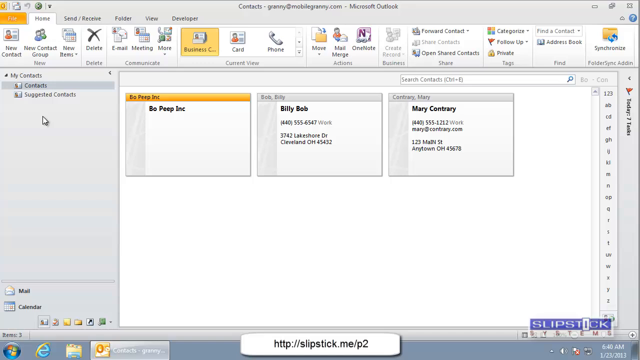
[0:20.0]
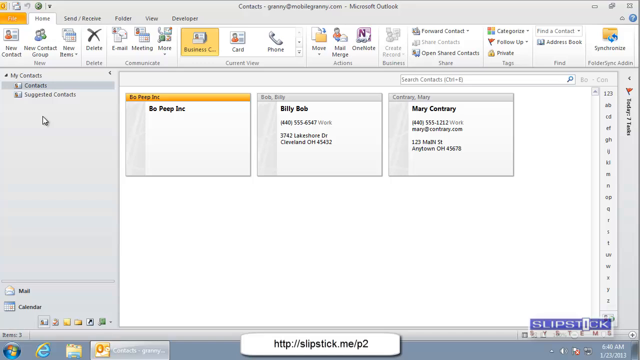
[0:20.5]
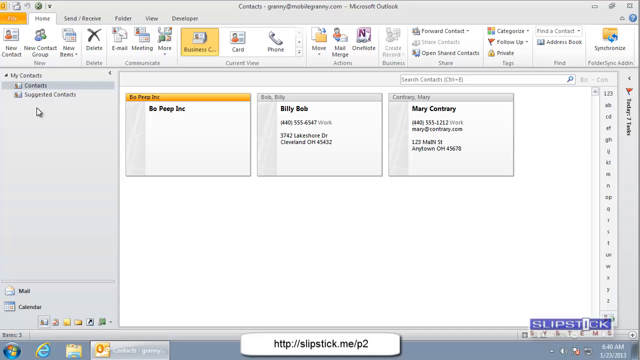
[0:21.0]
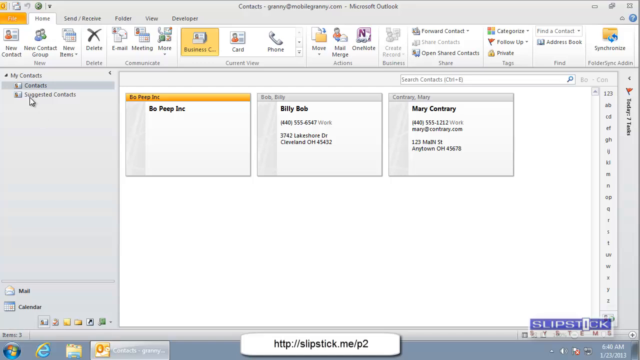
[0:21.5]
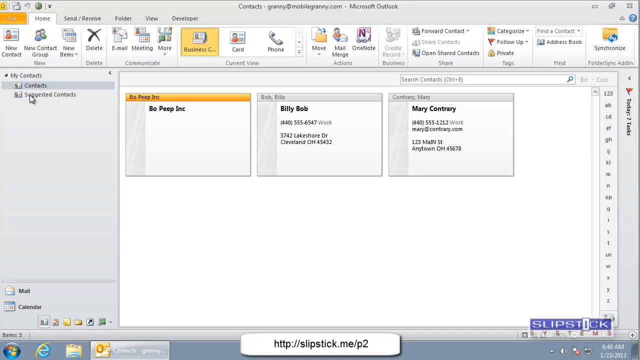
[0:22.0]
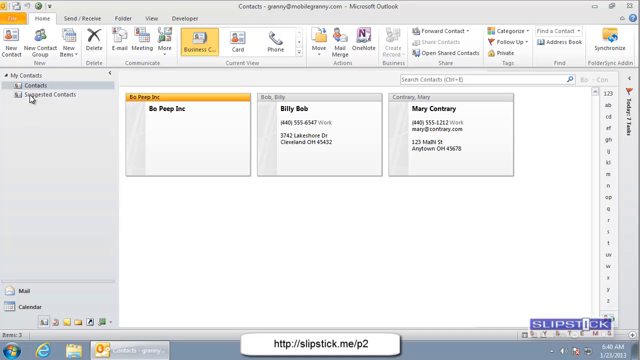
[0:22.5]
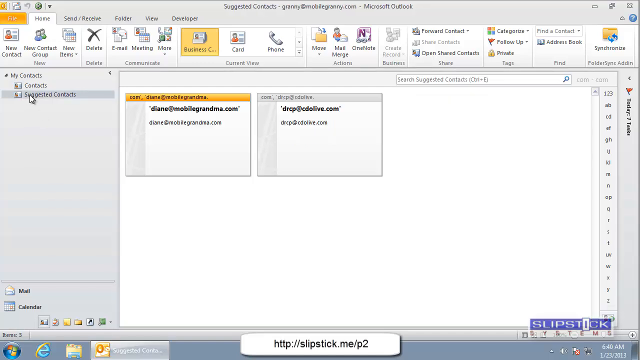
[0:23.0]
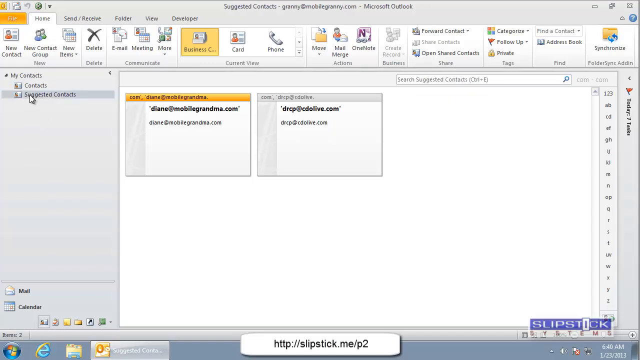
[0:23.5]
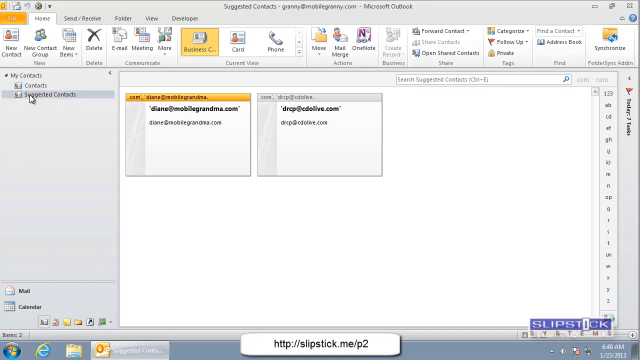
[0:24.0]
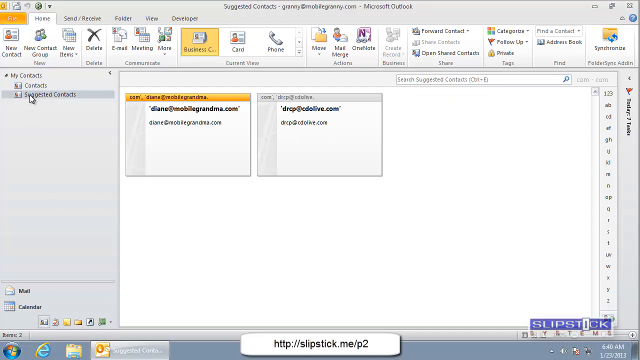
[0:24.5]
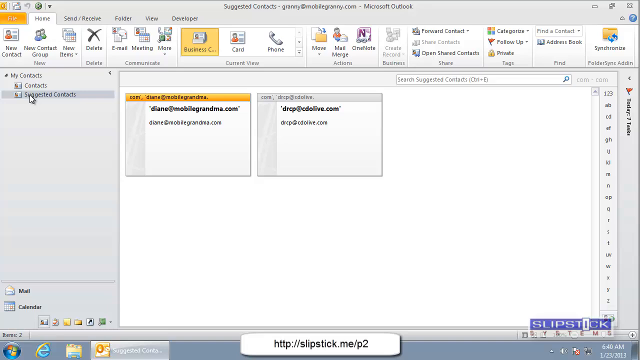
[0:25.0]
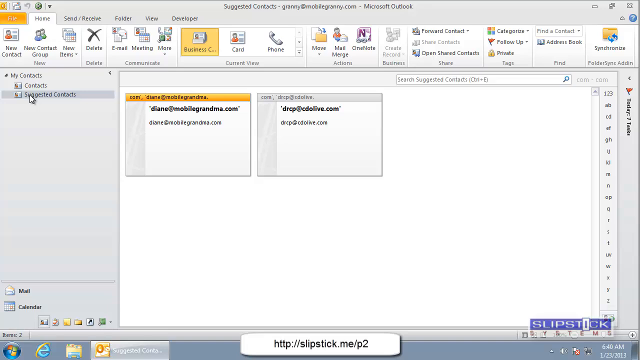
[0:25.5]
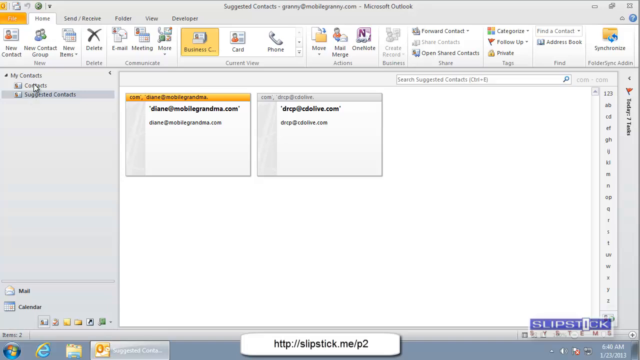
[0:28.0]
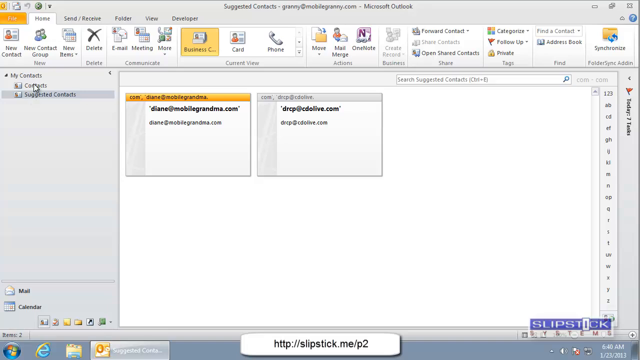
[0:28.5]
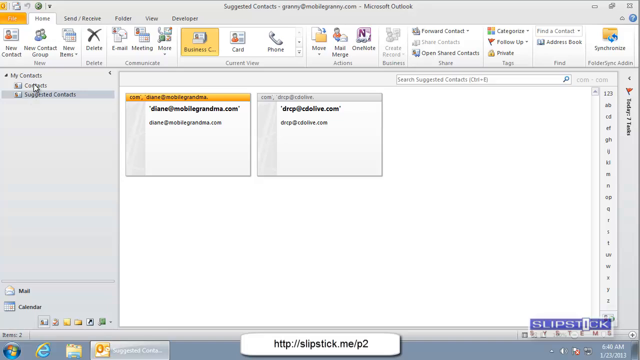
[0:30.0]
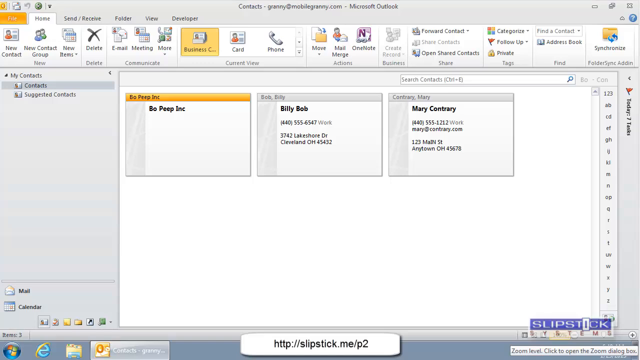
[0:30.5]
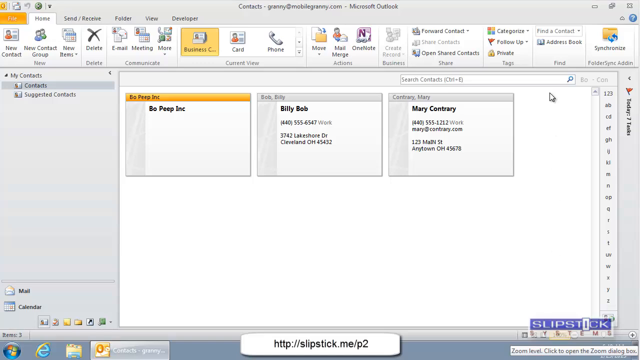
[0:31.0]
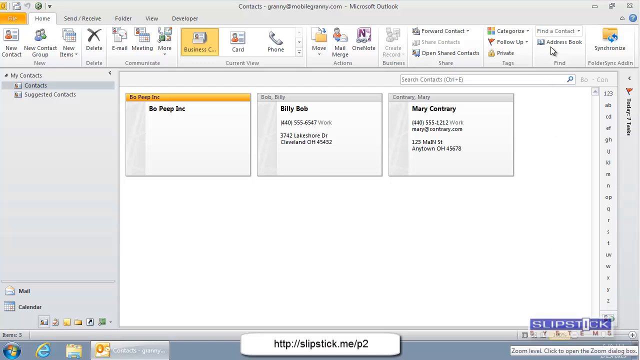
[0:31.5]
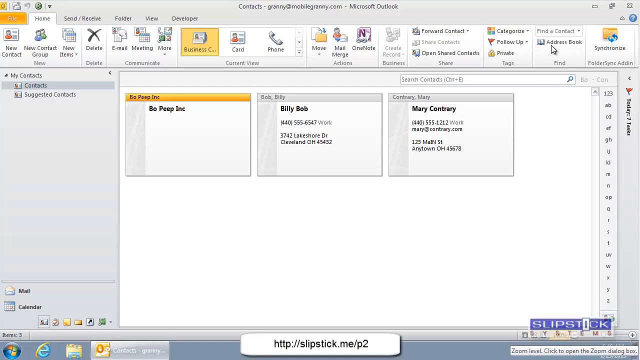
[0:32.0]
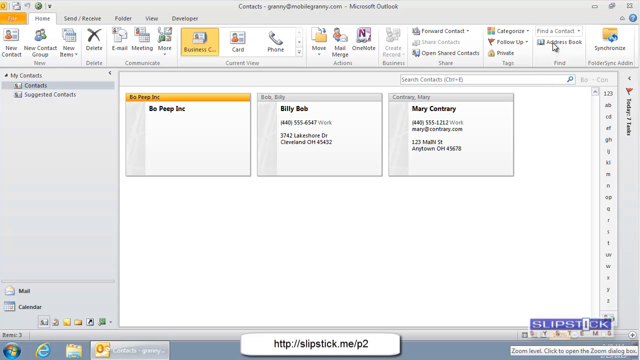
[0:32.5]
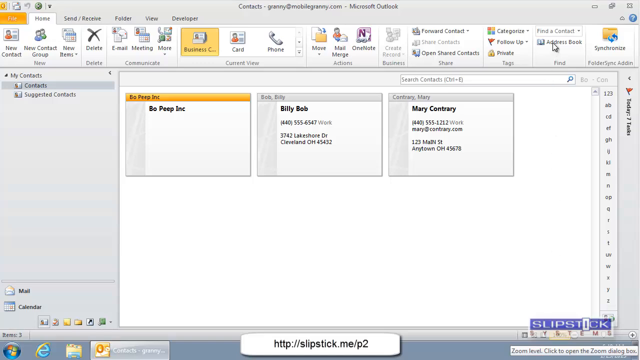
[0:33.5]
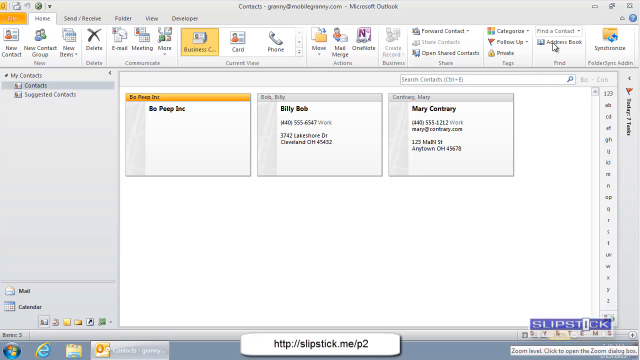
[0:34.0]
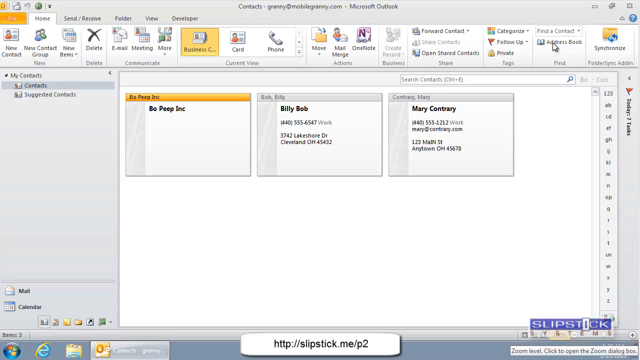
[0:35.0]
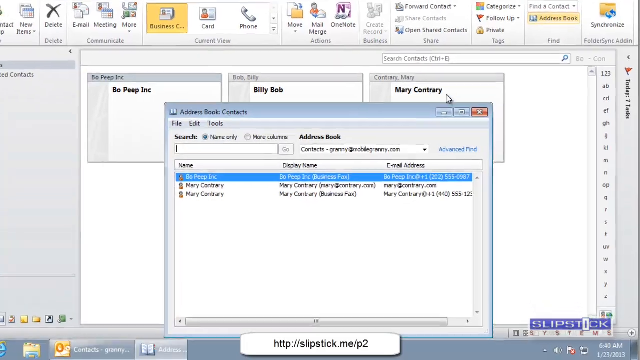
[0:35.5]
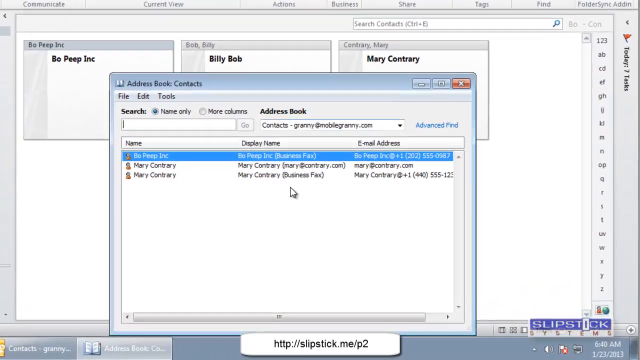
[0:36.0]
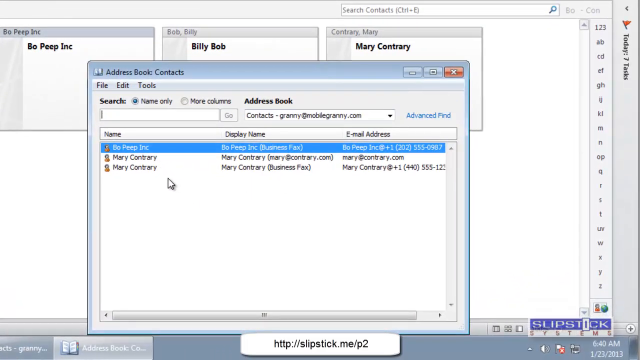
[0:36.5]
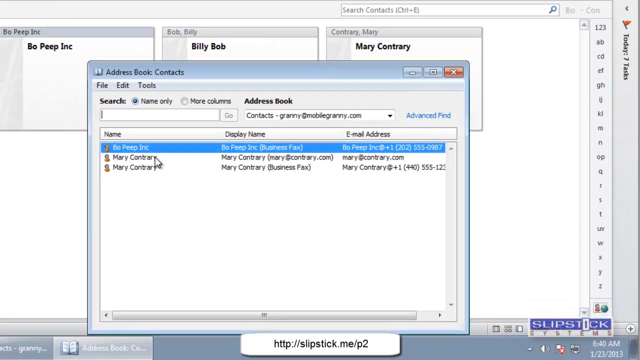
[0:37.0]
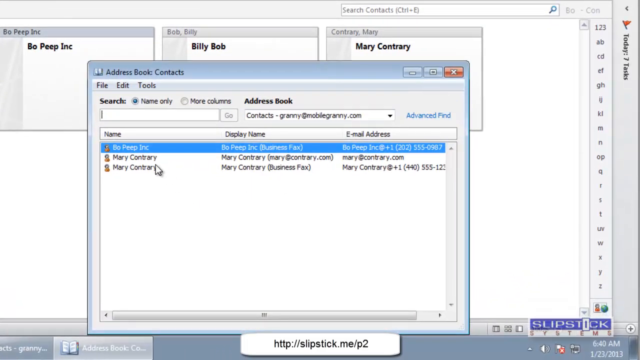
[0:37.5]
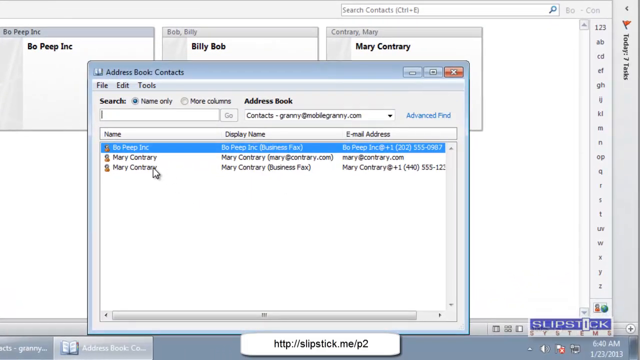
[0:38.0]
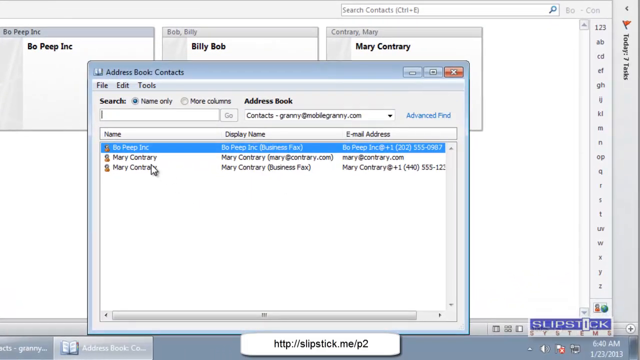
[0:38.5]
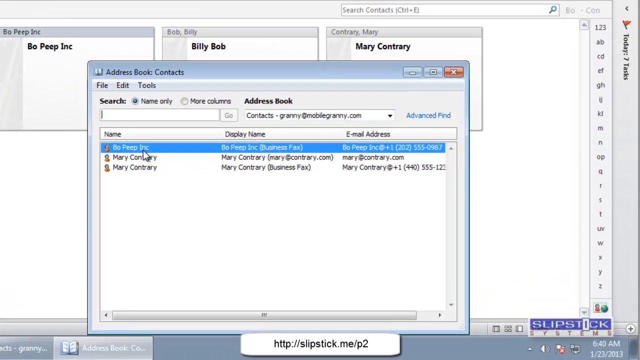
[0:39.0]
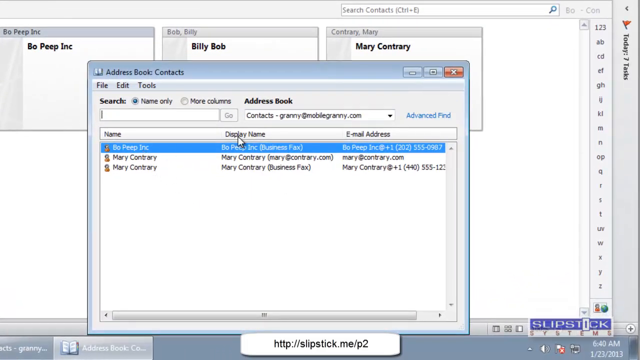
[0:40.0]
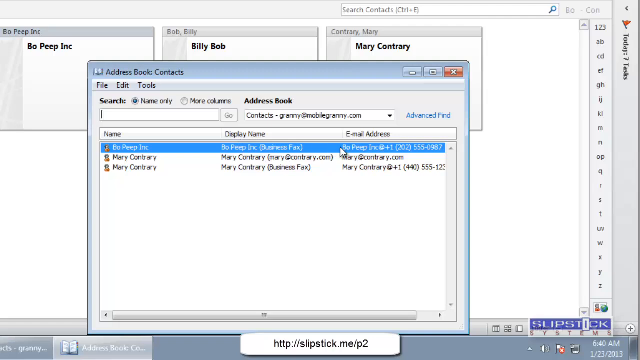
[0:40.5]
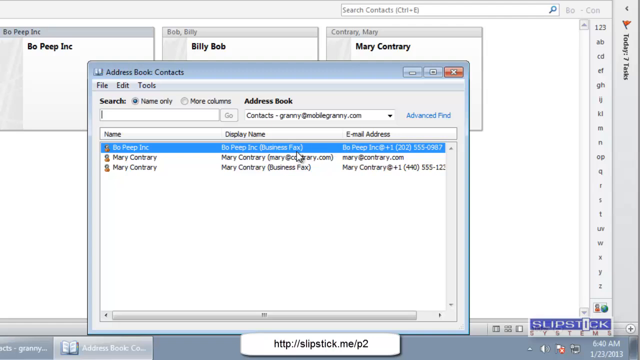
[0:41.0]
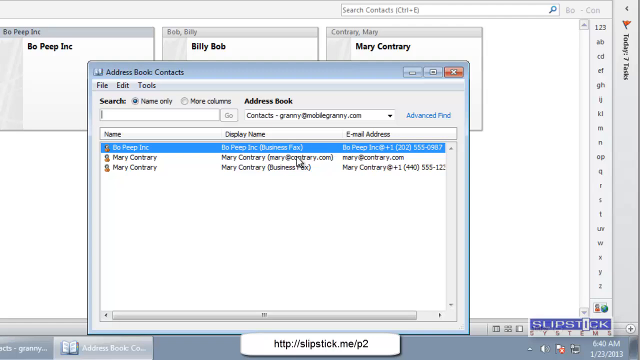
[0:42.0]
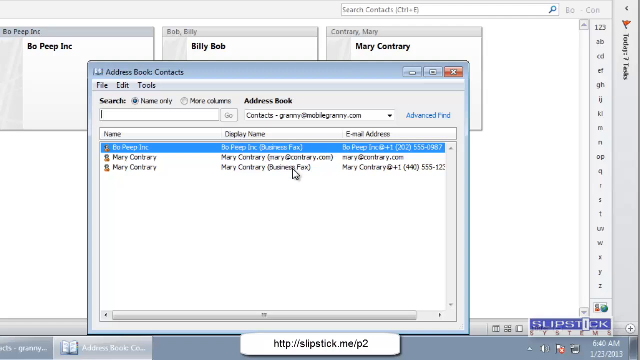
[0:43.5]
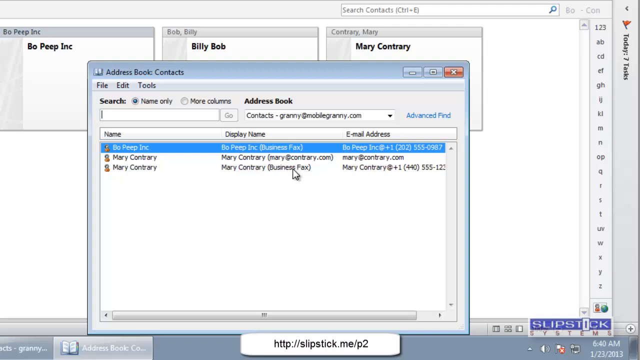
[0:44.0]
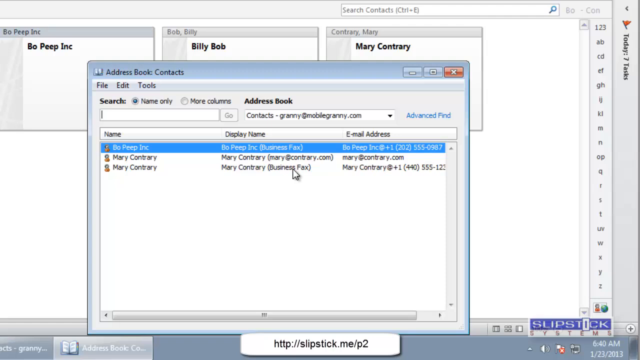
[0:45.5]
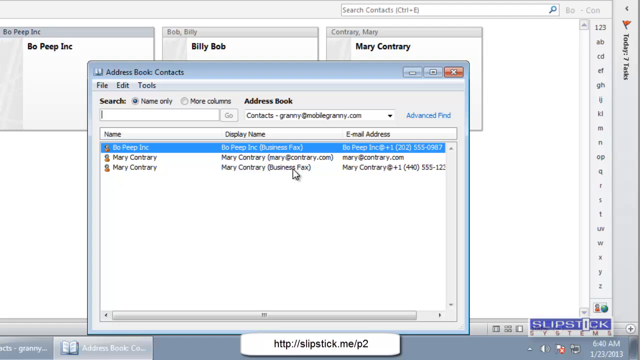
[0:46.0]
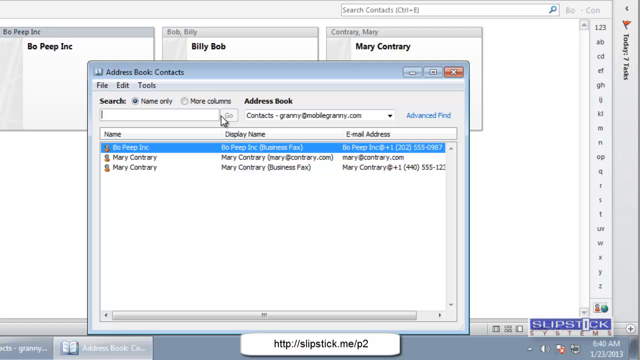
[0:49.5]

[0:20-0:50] The business section of Outlook still seems to be in focus. Three title cards, apparently meant to be businesses, appear to be underneath My Contacts, so they are presumably business contacts. On the far left is Bo Peep Inc., in the middle is Billy Bob with a phone number and an address, and on the far right is Mary Contrary with a phone number, an email address and an address. The user then appears to select Suggested Contacts, which seems to show some additional email addresses; the small text is hard to make out, but one appears to say Diane at mobilegrandma.com and the other apparently DRCP at cdolive.com. The user then seems to go to the address book and click on it, and the contacts are now in the address book.